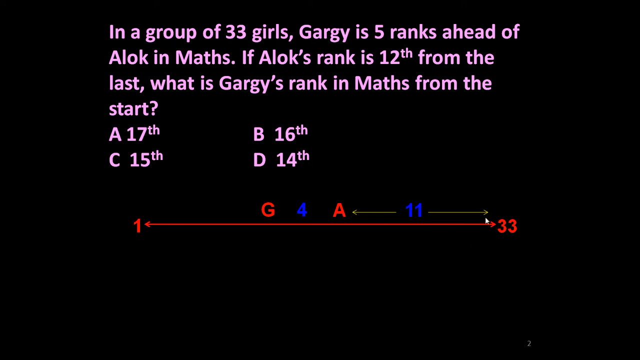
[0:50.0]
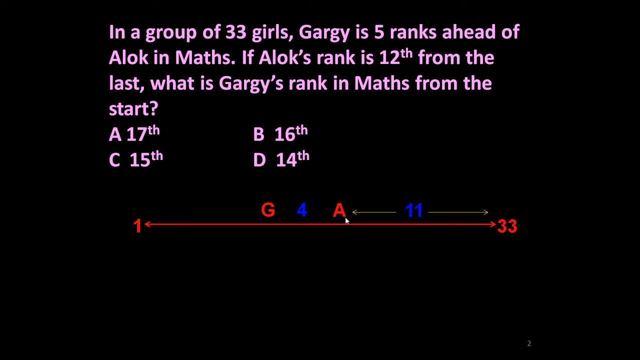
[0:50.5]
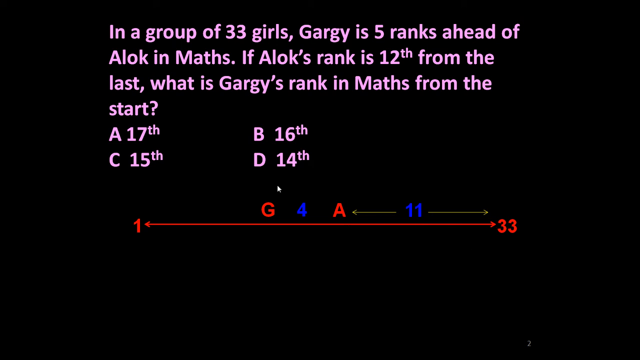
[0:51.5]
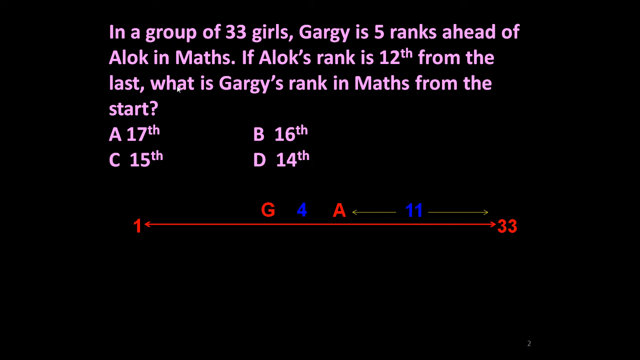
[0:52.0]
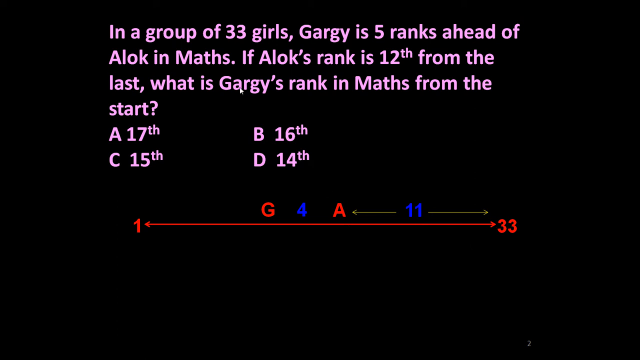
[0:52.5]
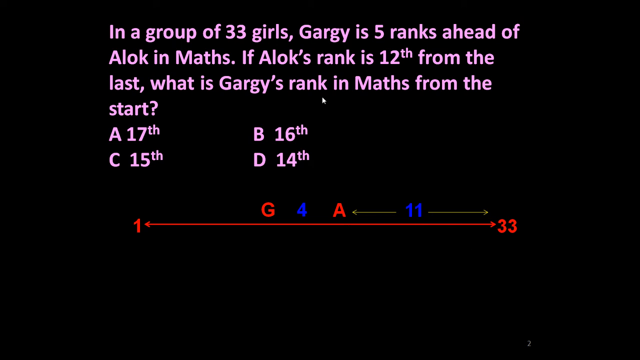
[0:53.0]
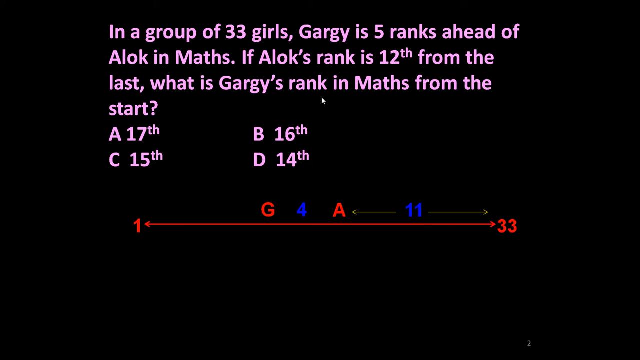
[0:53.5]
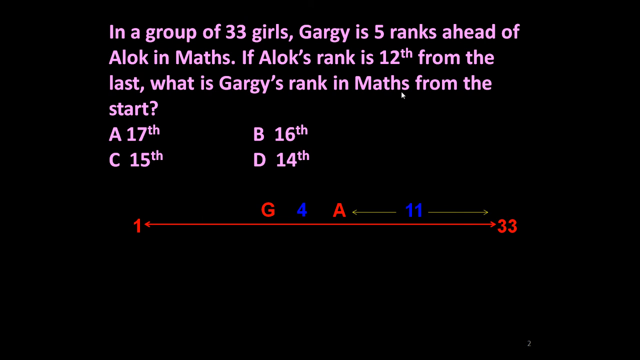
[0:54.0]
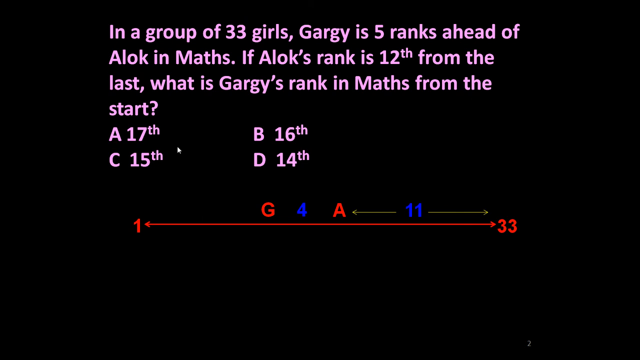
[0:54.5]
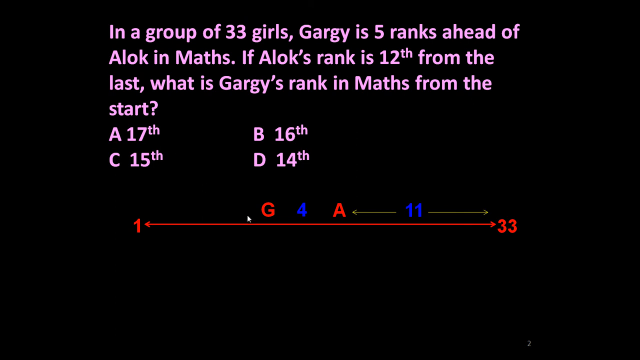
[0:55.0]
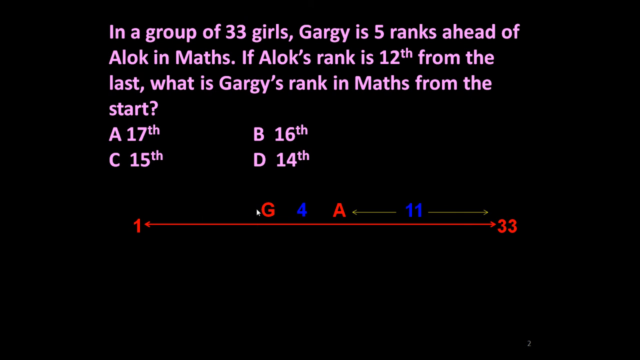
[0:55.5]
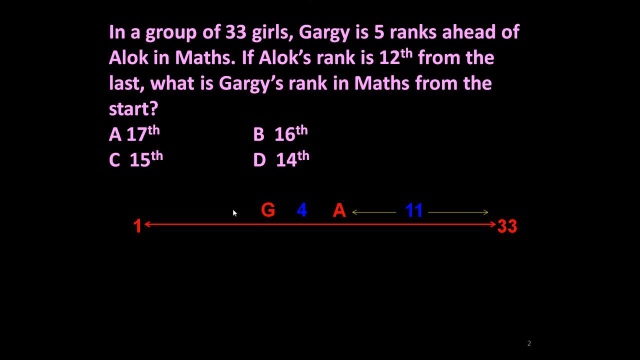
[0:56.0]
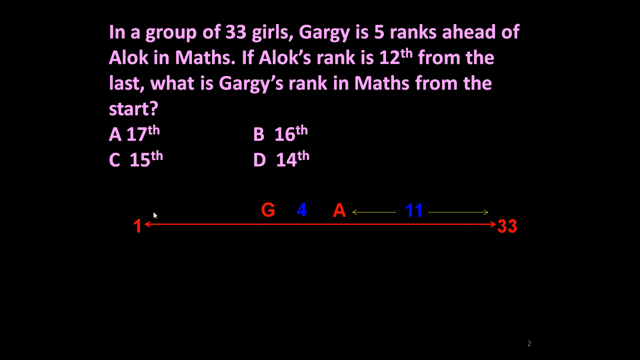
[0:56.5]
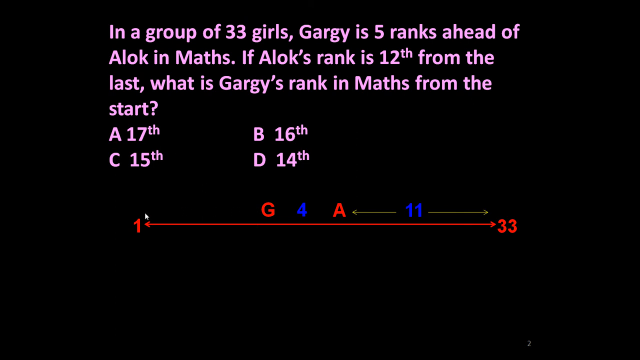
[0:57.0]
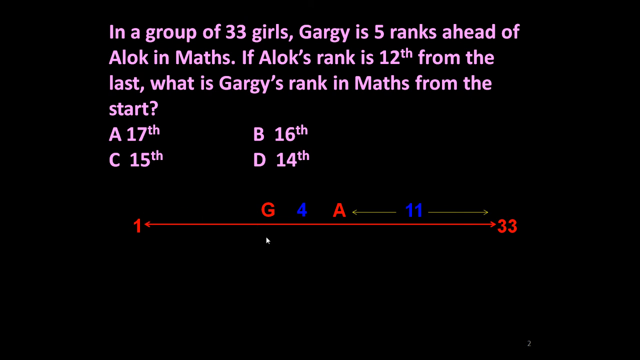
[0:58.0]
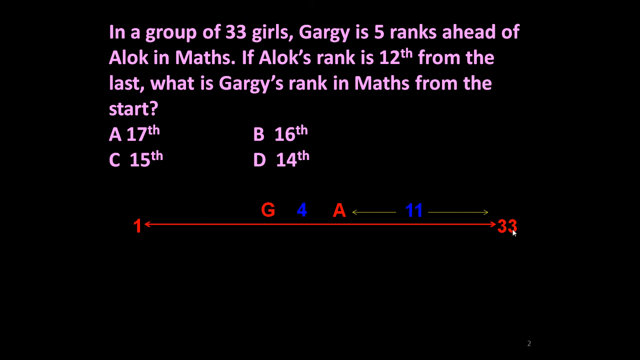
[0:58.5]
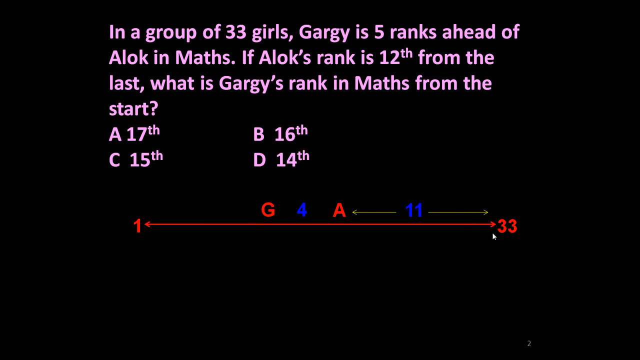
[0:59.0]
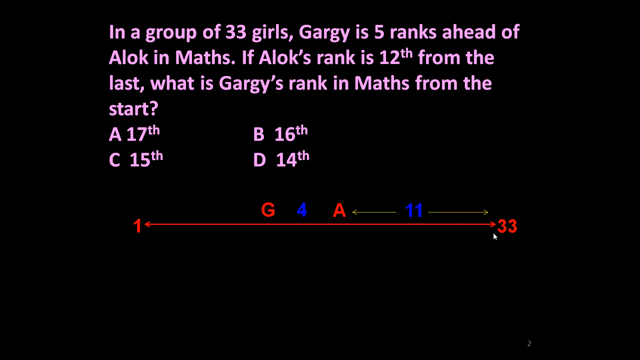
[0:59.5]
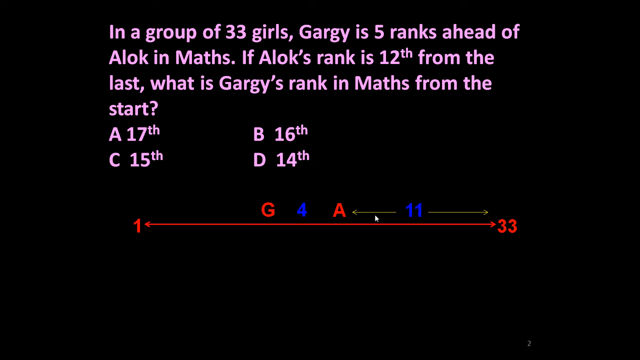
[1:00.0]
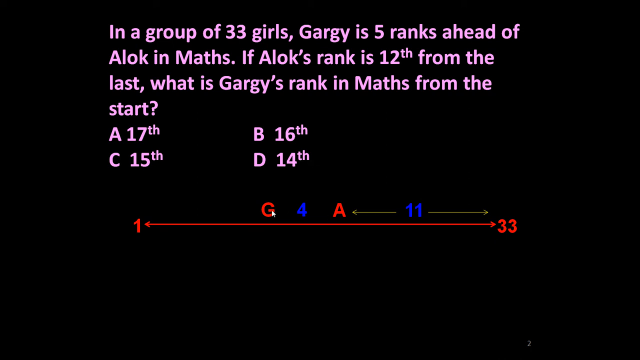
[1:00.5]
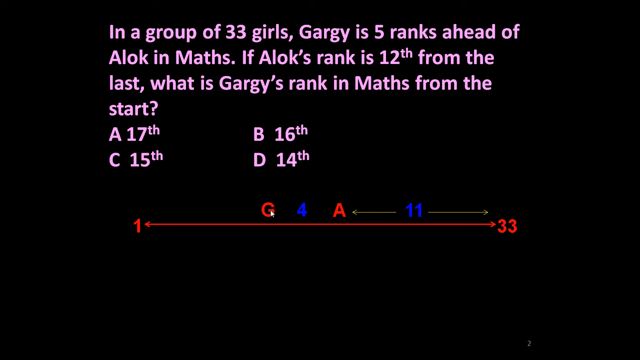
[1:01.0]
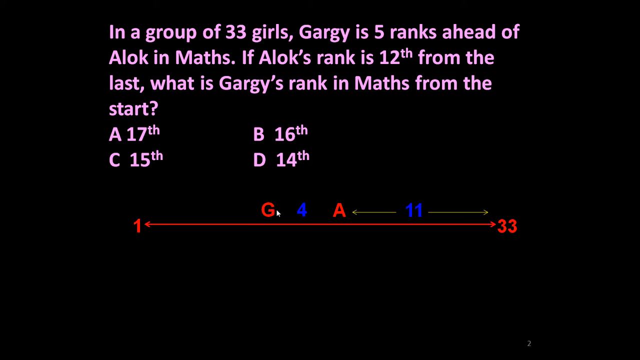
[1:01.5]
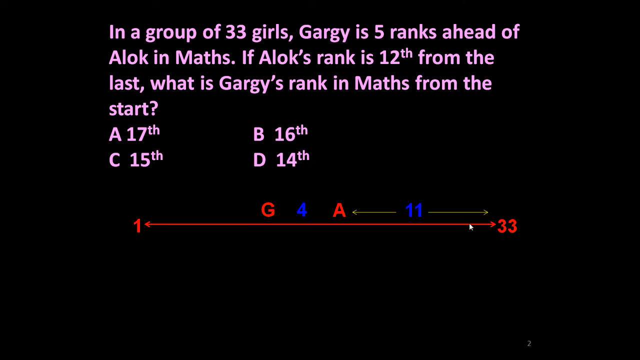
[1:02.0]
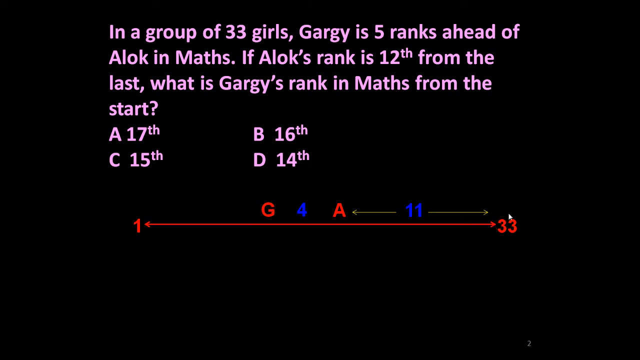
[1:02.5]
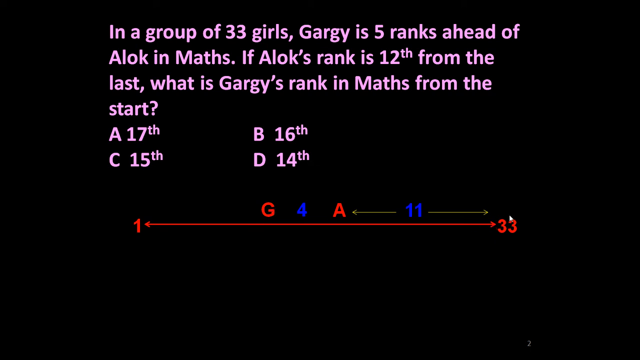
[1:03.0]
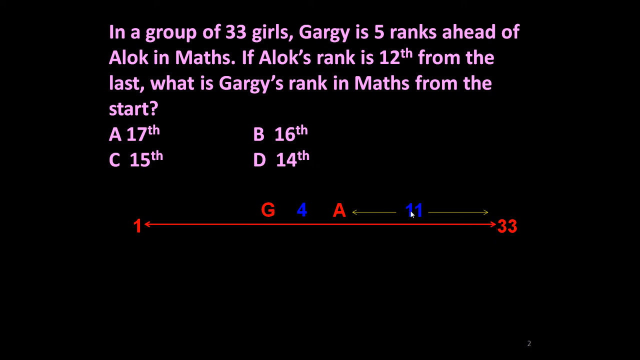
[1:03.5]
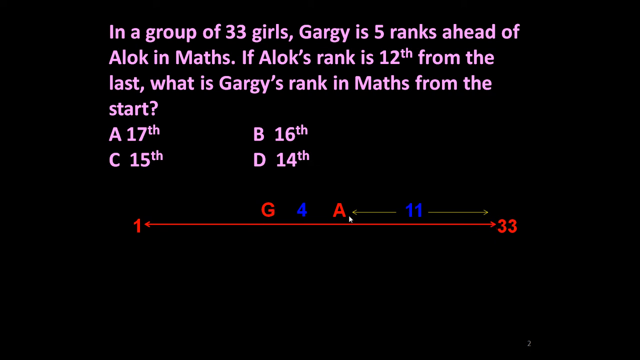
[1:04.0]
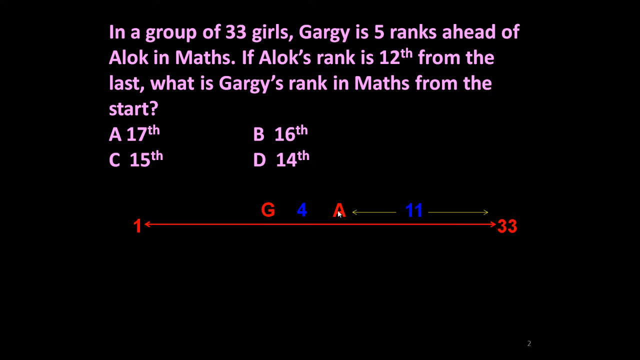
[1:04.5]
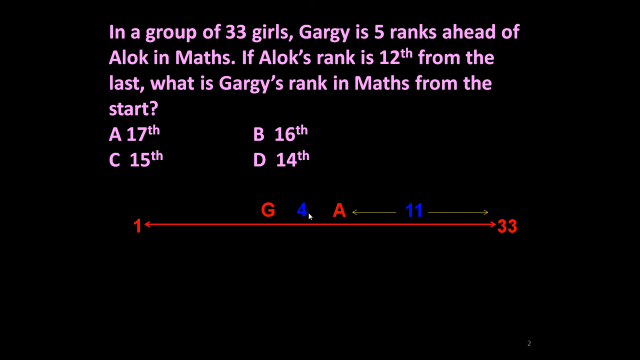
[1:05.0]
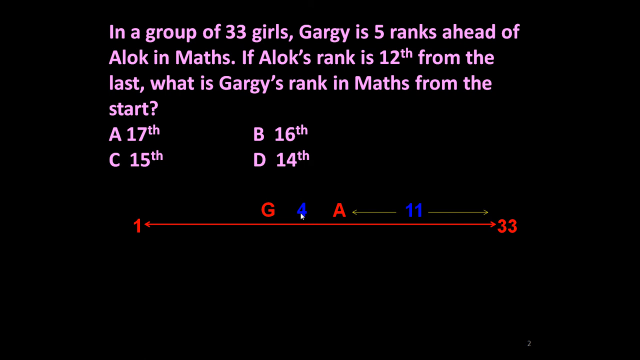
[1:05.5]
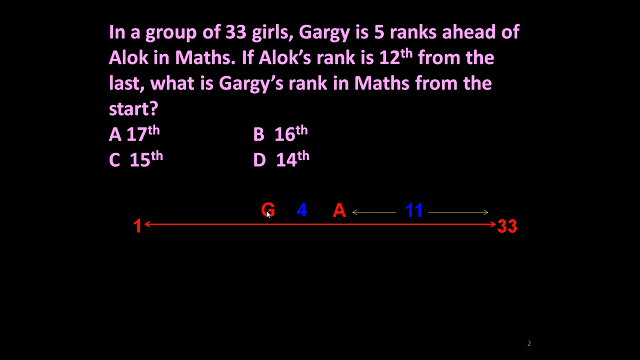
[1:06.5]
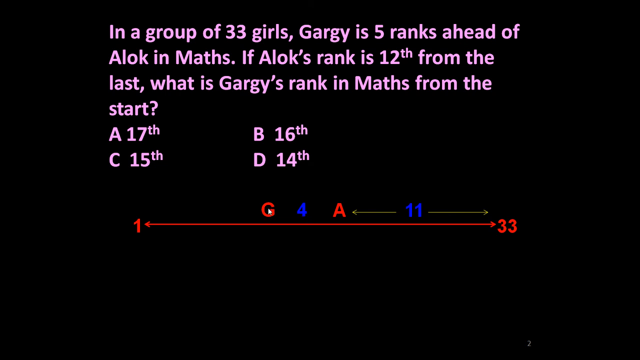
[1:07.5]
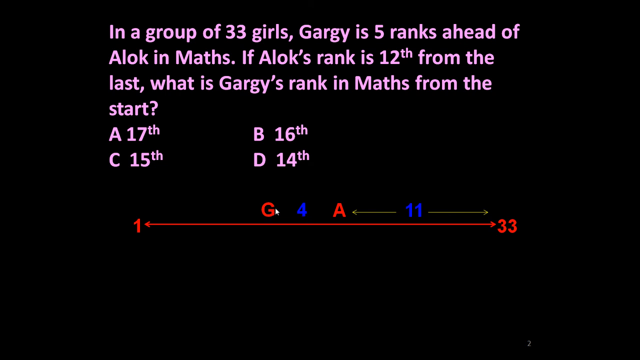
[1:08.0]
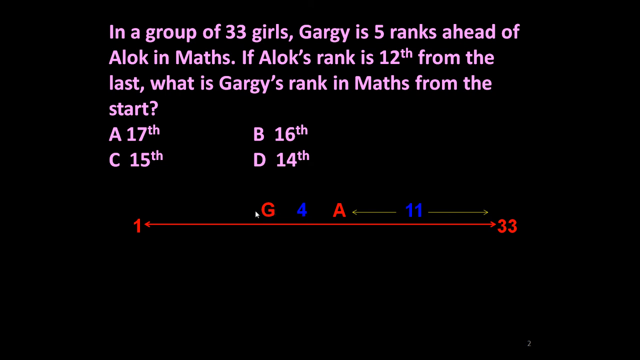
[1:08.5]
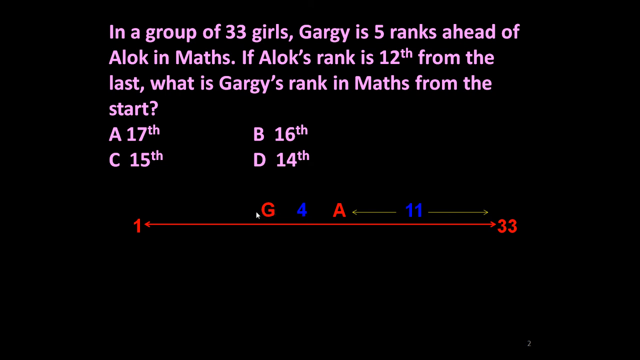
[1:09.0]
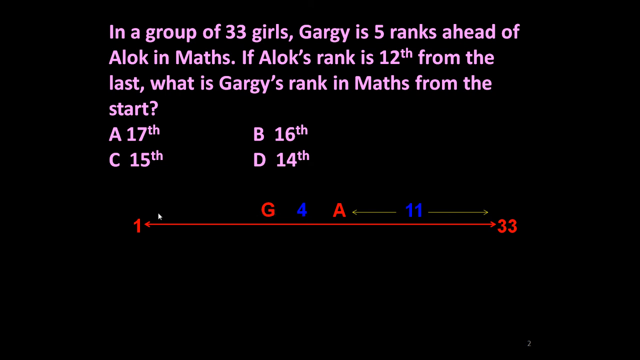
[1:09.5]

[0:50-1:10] The question by Professor A. K. Agarwal is on screen: "In a group of 33 girls, Gargy is 5 points ahead of Alok in Maths. If Alok's rank is 12th from the last, what is Gargy's rank in Maths from the start?" The options are A 17th, B 16th, C 15th and D 14th. A line is drawn from the left side below the answers, and G, 4 and A are drawn in the middle. The number 11 then appears between the letter A and the number 33, showing that the distance from A to 33 is 11. Part of the question is highlighted, along with where that part is relevant on the line chart. G is highlighted, marking Gargy, whose rank is to be solved.